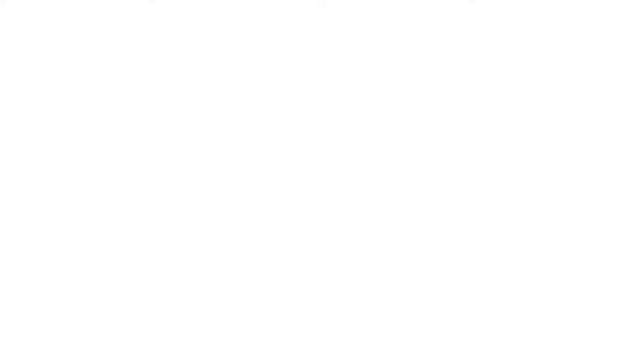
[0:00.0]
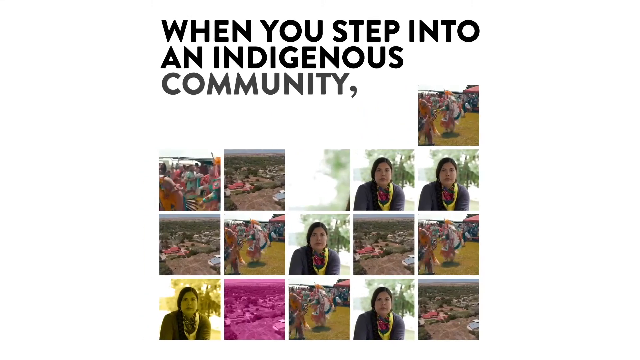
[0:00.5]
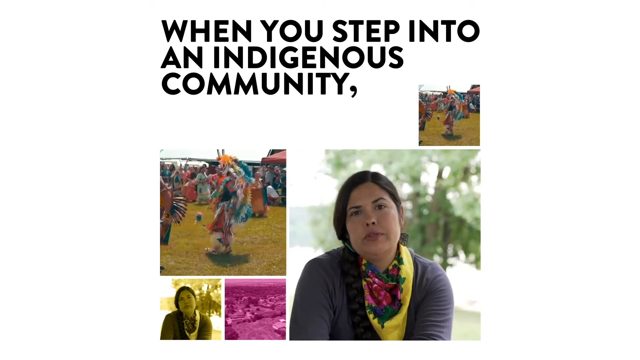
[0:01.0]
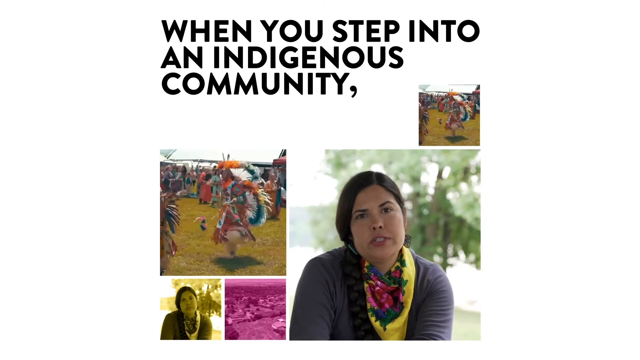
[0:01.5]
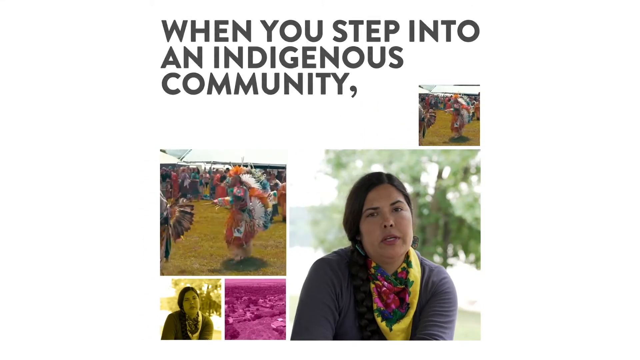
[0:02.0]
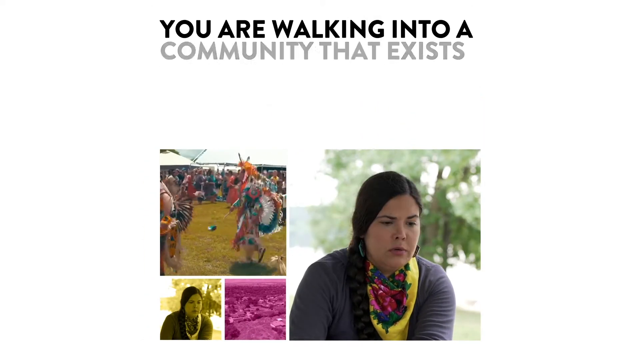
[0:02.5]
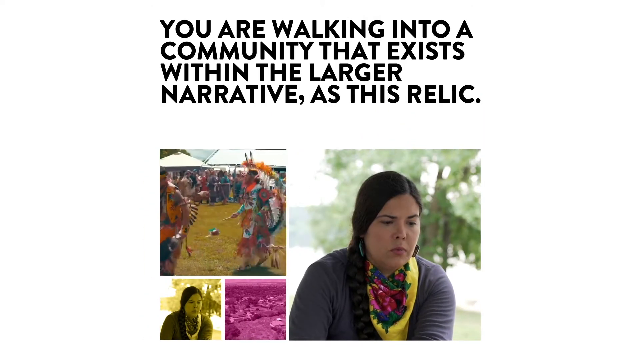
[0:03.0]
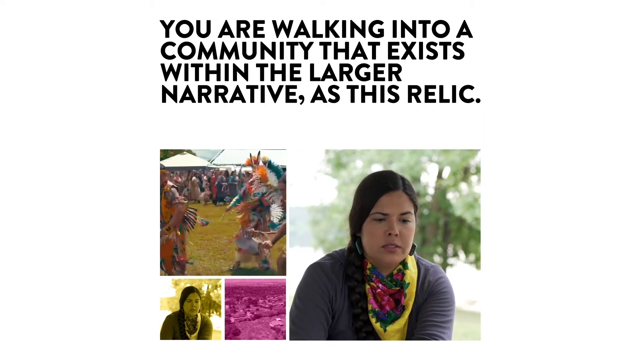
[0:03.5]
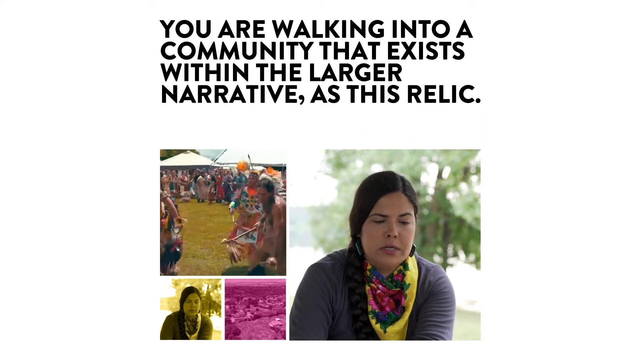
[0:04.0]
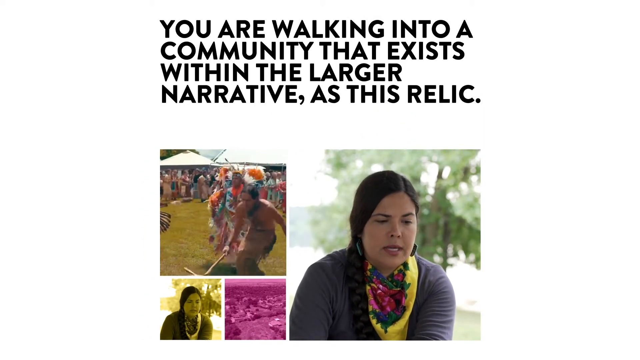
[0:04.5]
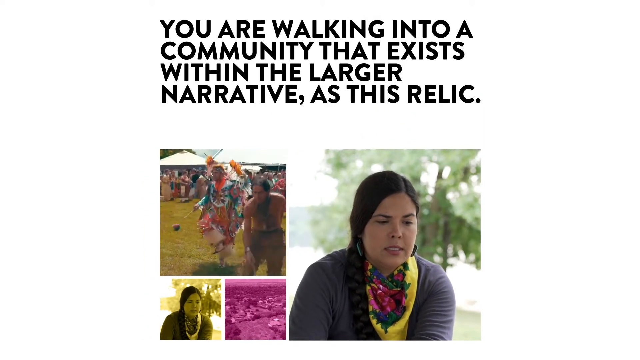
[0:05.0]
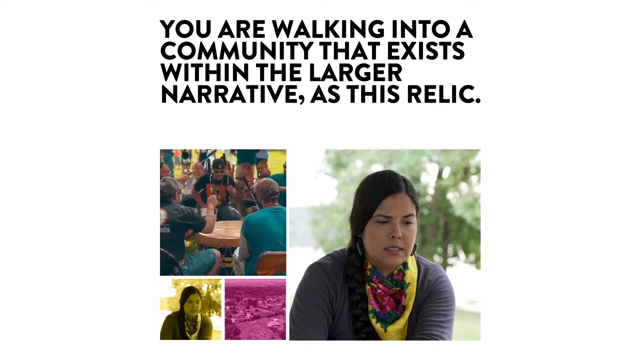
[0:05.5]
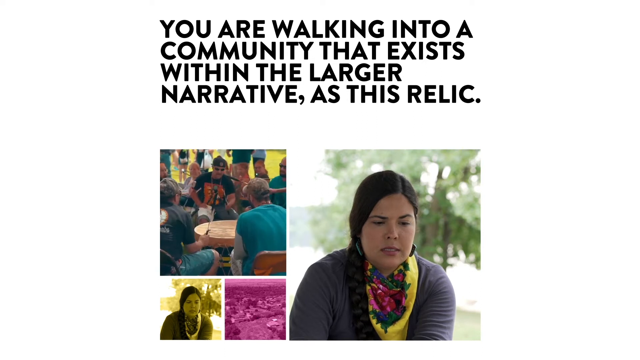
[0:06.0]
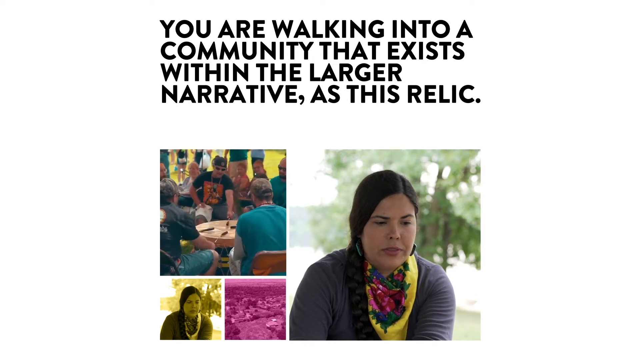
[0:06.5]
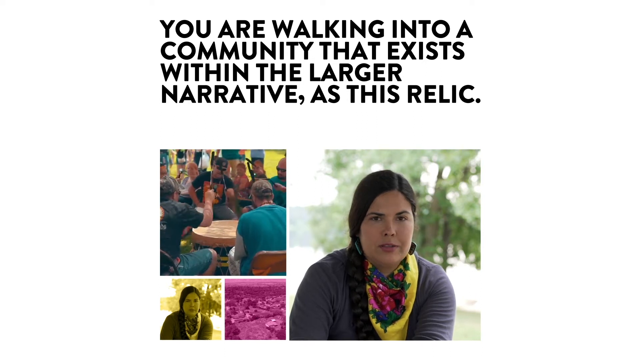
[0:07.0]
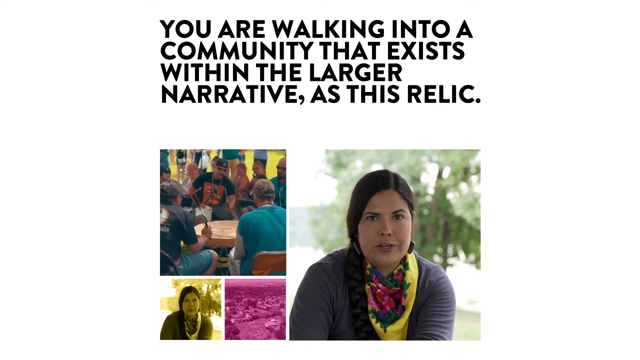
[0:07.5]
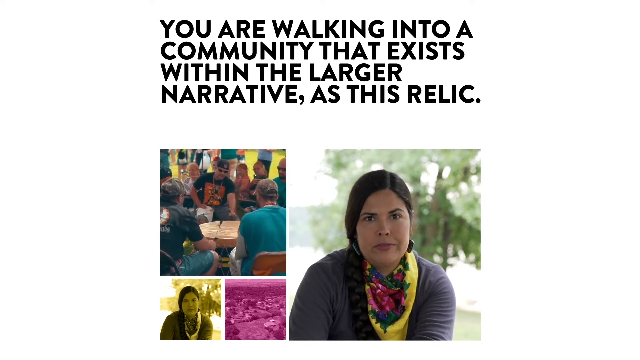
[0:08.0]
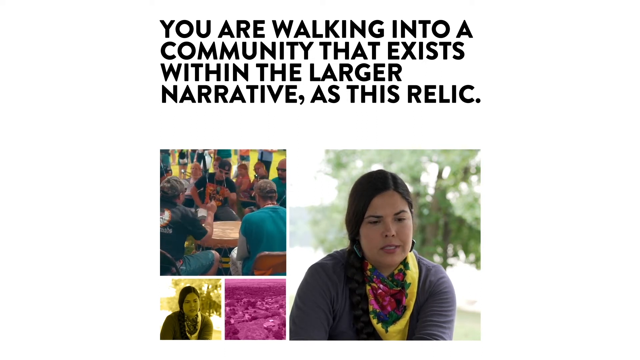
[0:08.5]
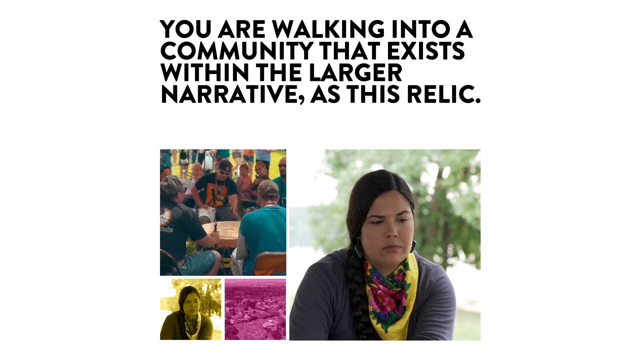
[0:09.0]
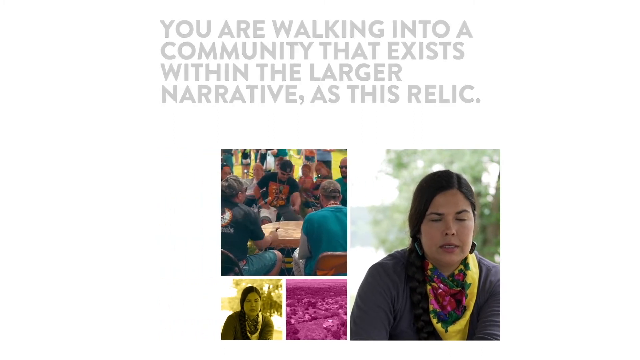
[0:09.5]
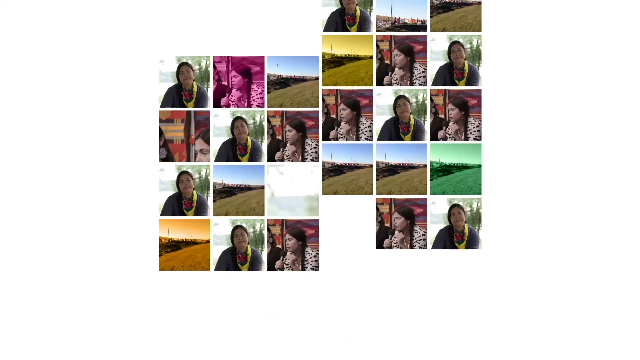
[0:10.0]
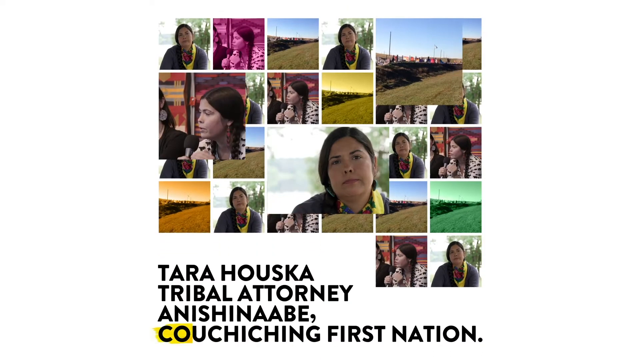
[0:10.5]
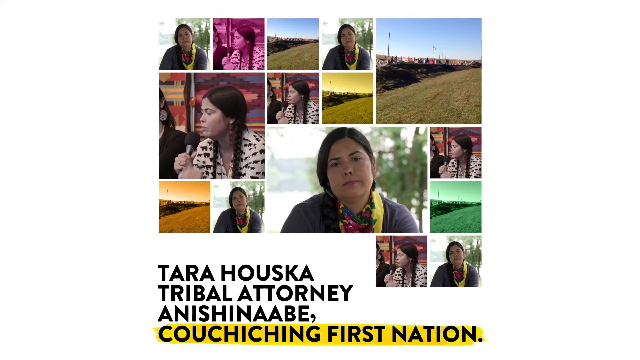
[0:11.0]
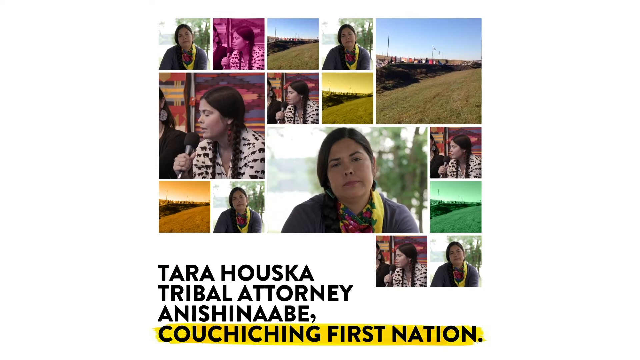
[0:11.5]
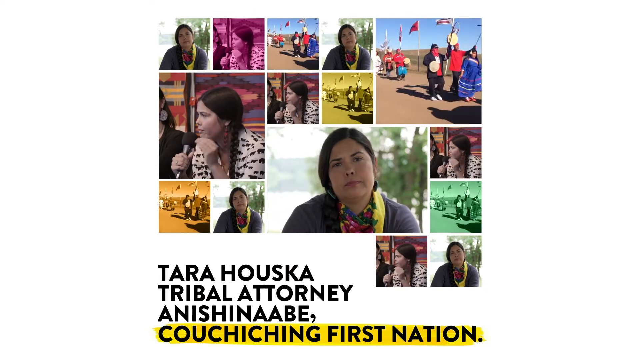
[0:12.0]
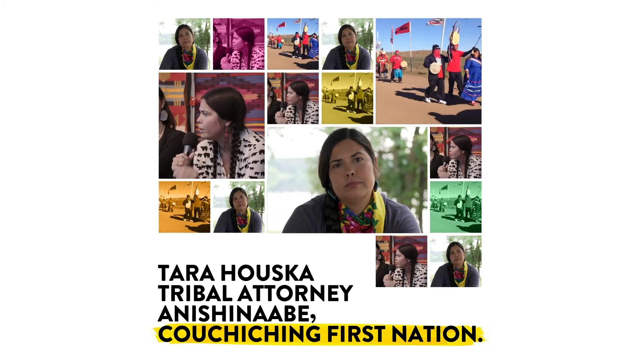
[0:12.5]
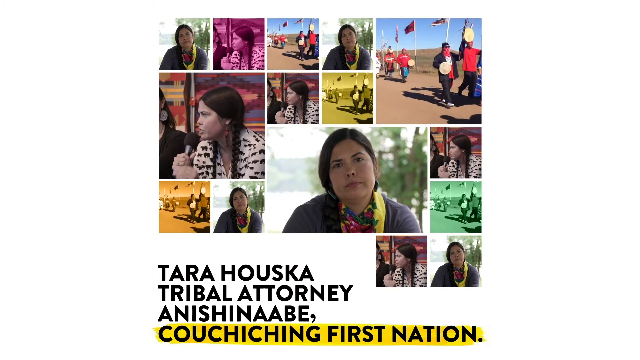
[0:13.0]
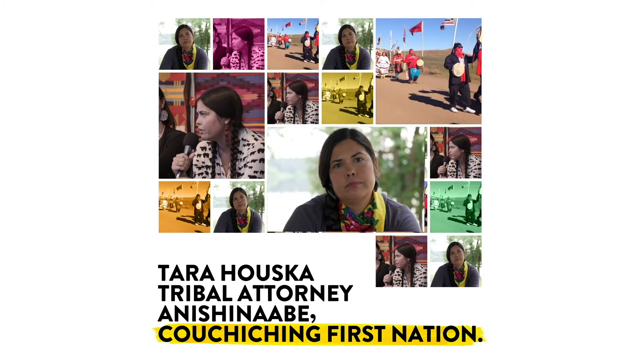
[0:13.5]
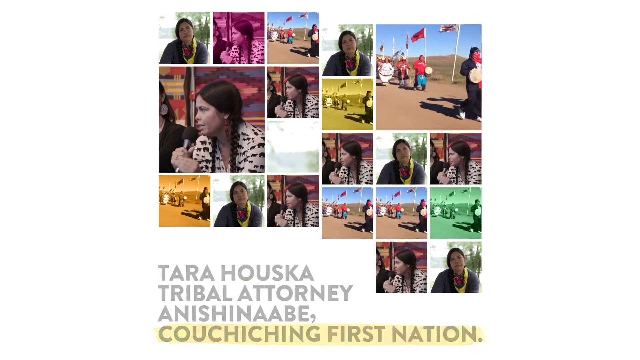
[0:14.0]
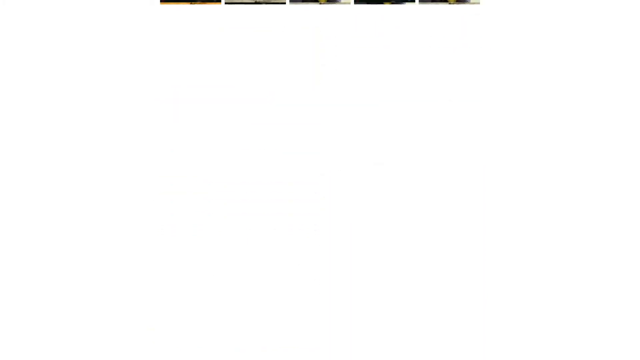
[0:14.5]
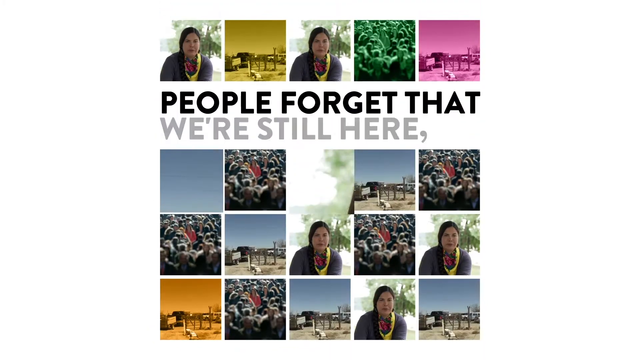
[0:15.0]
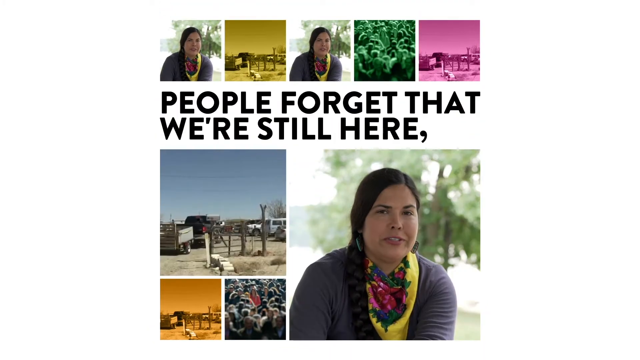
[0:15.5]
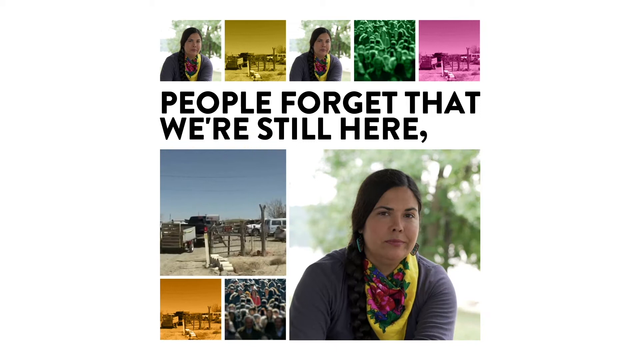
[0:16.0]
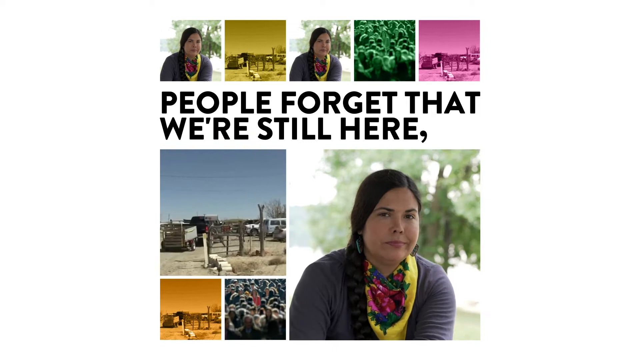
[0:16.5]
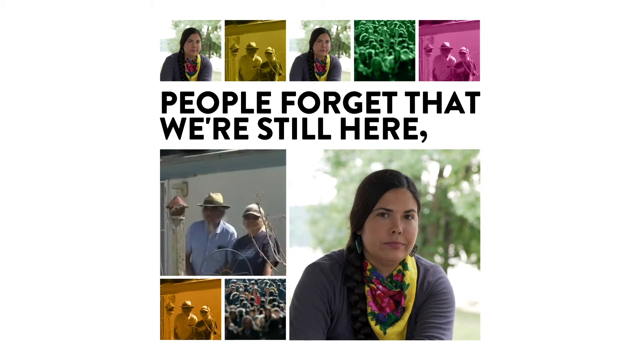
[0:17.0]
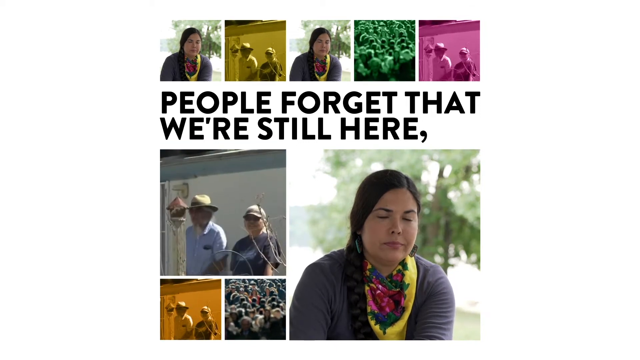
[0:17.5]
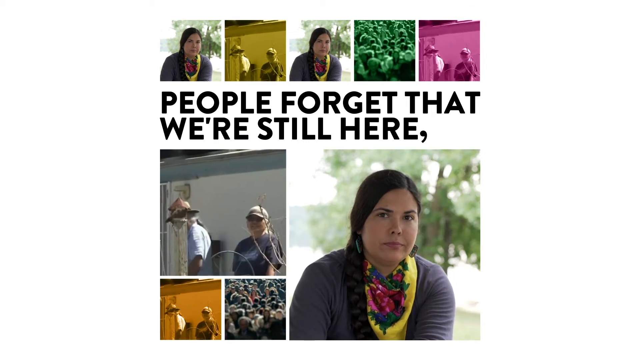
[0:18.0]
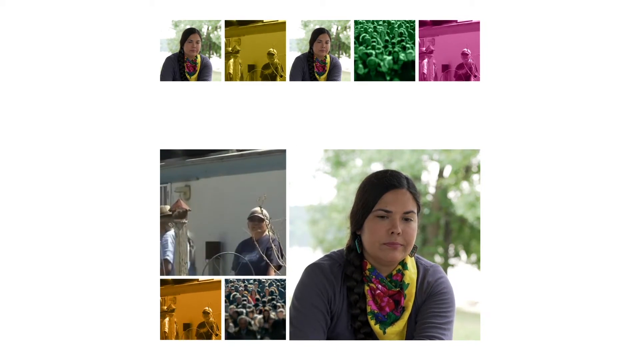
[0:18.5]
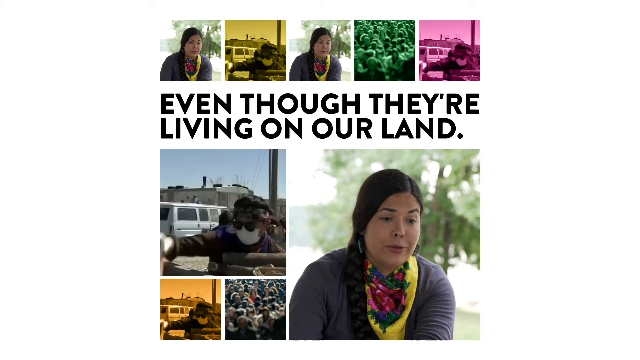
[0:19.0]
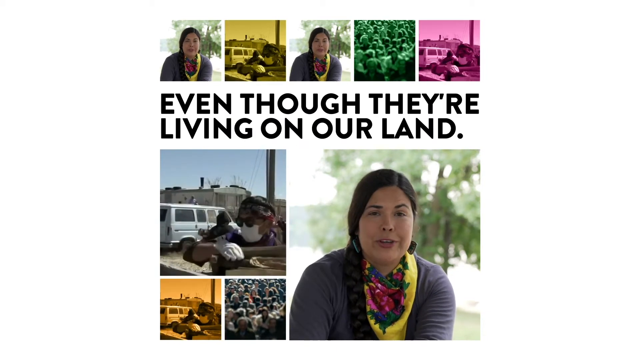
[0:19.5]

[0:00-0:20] A lot of text appears on the screen. A woman who appears to be an attorney, apparently a tribal attorney named Tara Huska, is shown, and she is probably indigenous. Many videos and pictures fill the screen, probably at least eight to ten at once, showing the community, how its people live and their ceremonies. Some of the videos appear to show people marching.